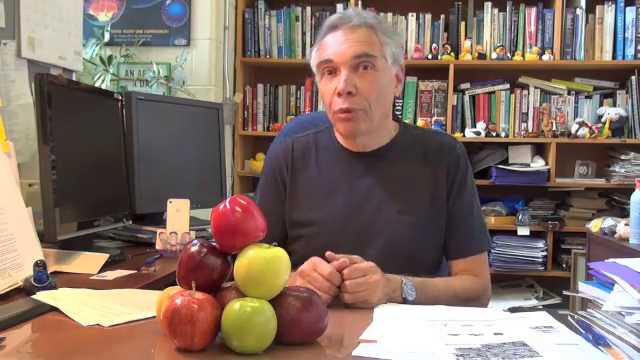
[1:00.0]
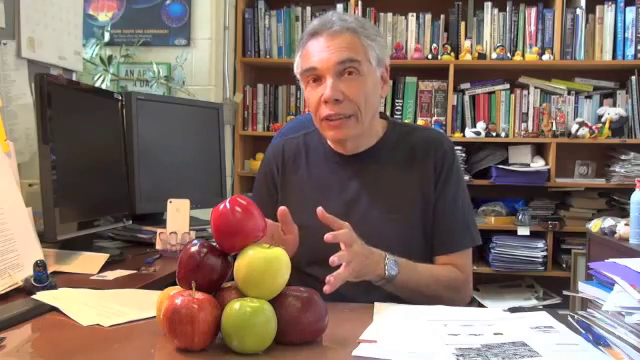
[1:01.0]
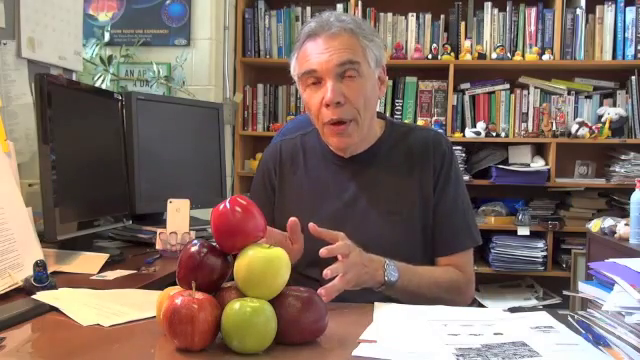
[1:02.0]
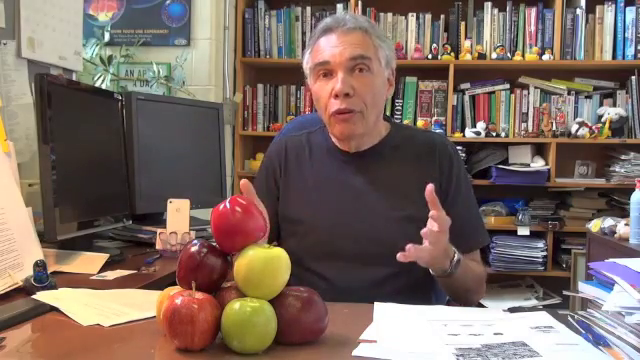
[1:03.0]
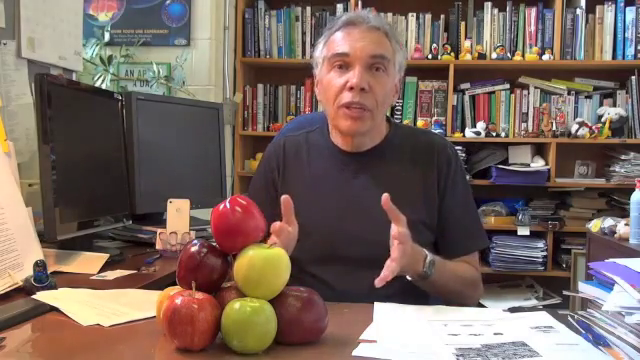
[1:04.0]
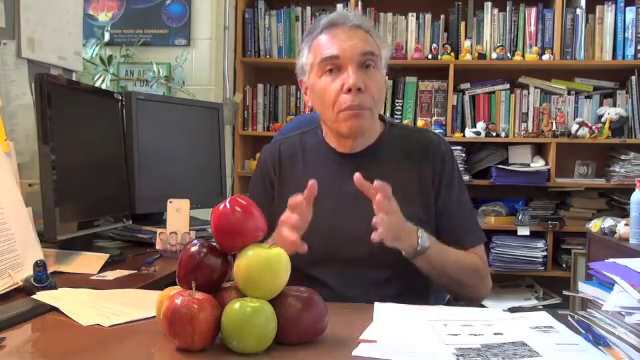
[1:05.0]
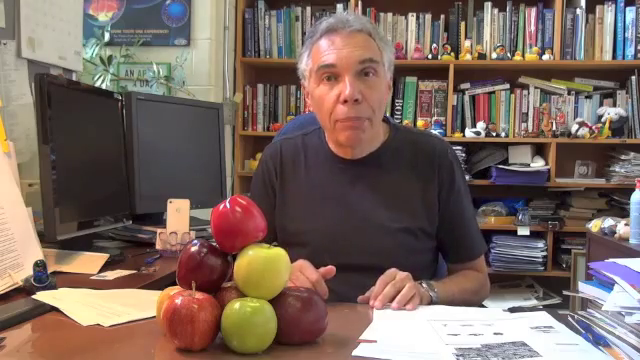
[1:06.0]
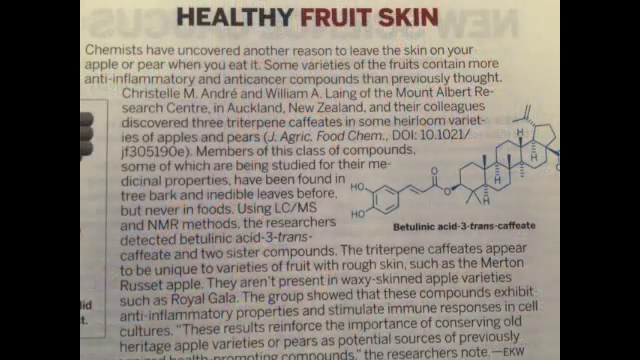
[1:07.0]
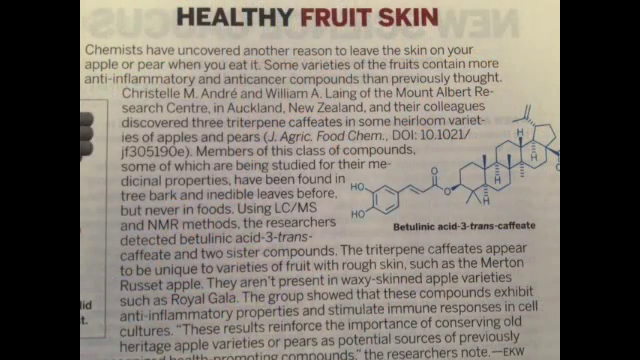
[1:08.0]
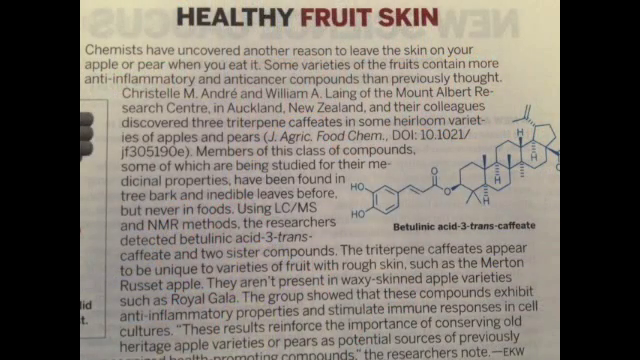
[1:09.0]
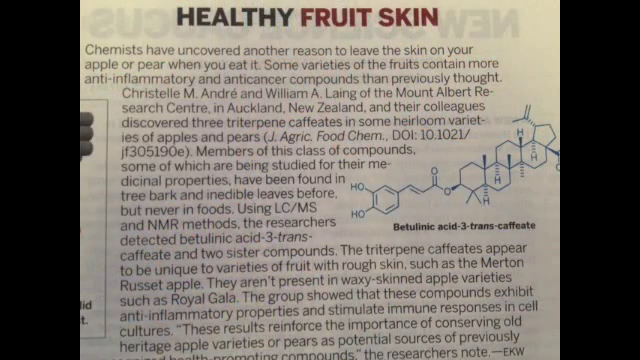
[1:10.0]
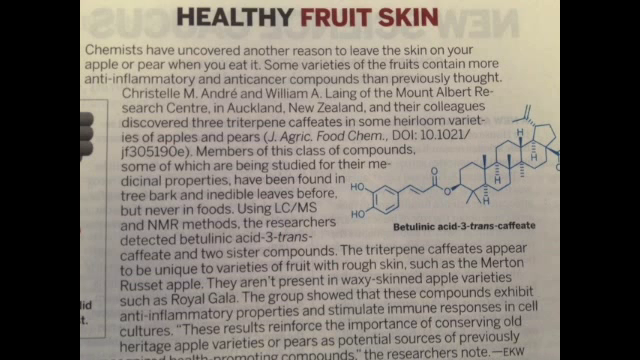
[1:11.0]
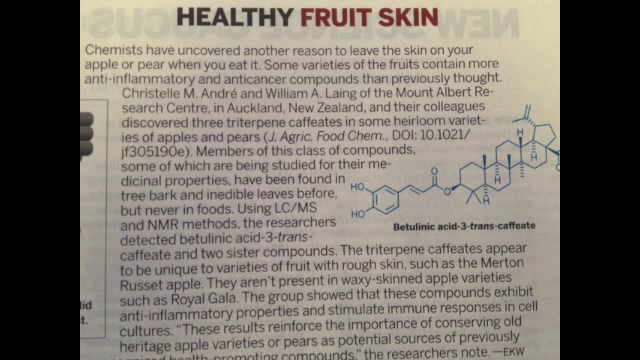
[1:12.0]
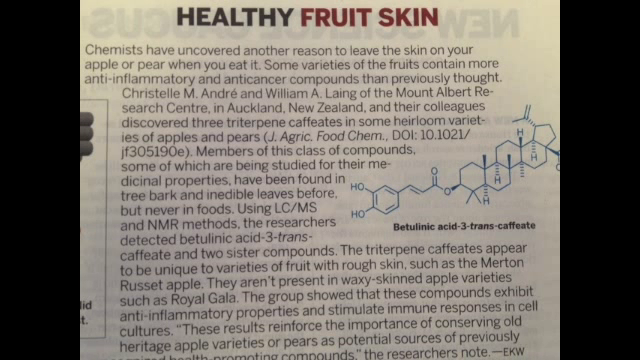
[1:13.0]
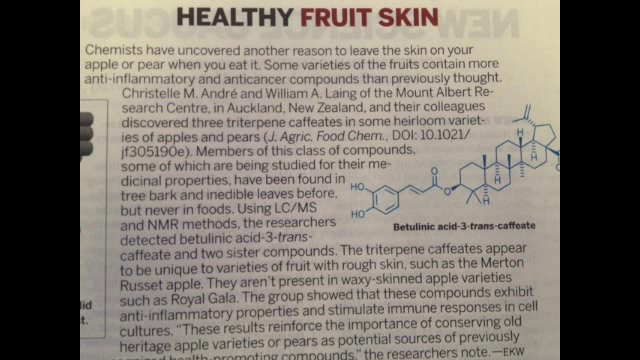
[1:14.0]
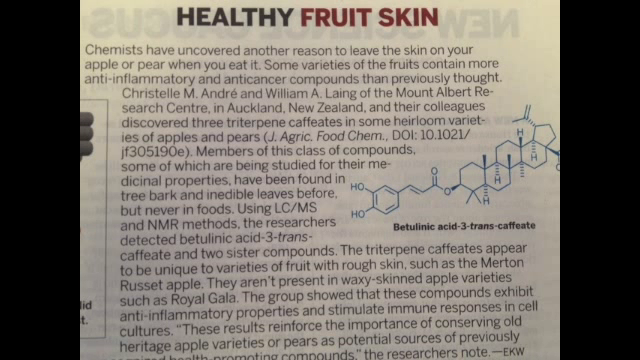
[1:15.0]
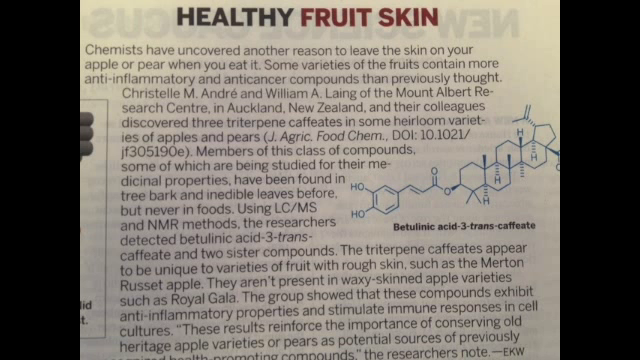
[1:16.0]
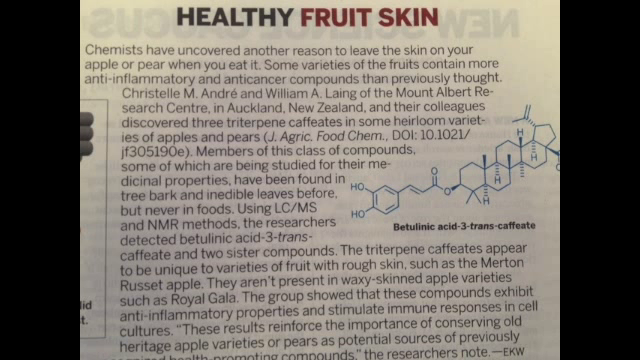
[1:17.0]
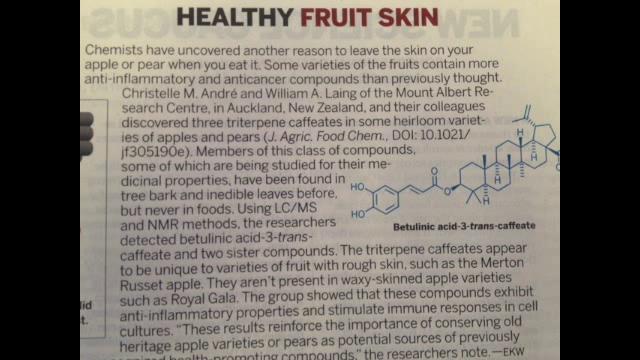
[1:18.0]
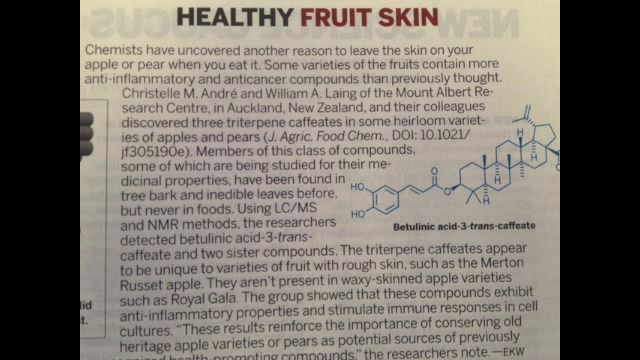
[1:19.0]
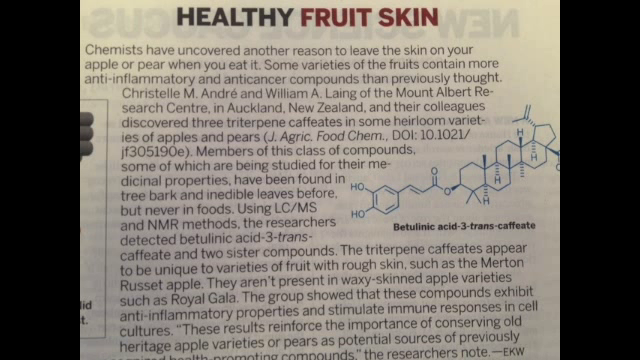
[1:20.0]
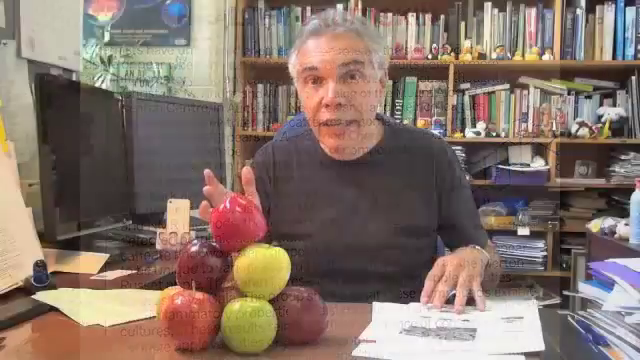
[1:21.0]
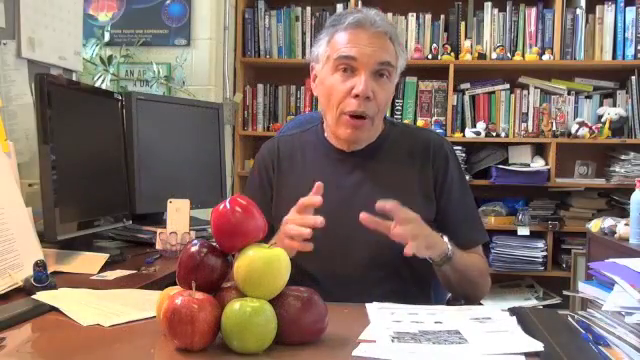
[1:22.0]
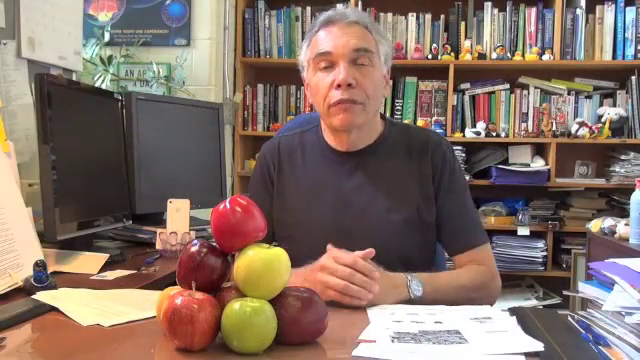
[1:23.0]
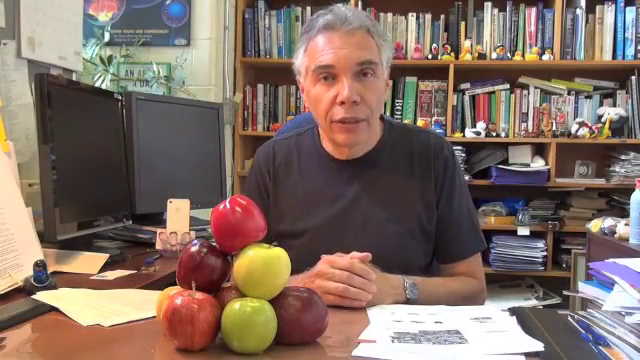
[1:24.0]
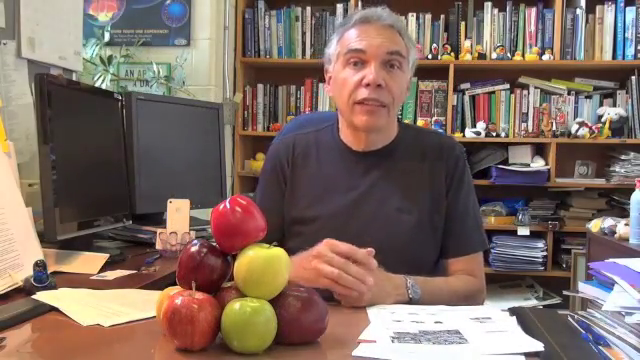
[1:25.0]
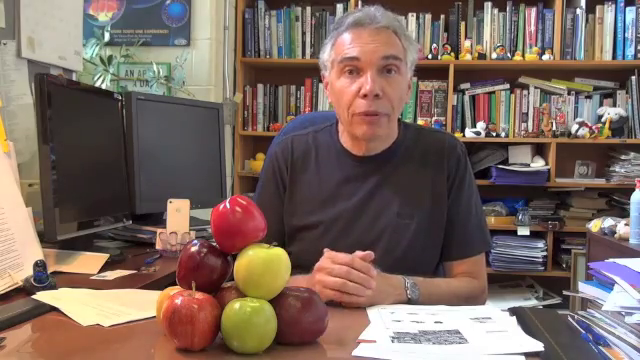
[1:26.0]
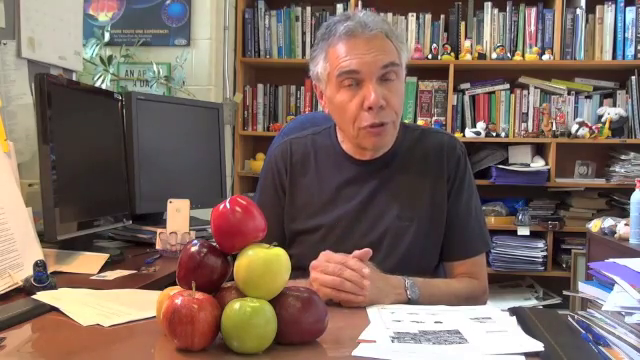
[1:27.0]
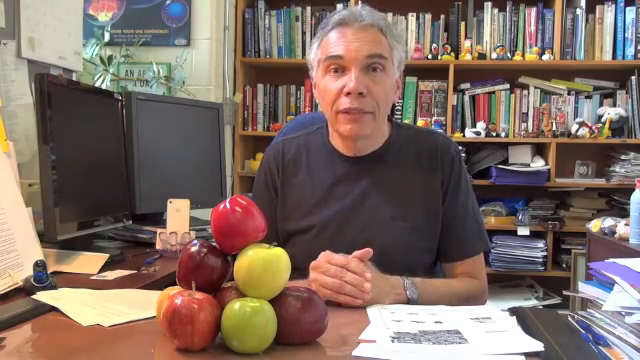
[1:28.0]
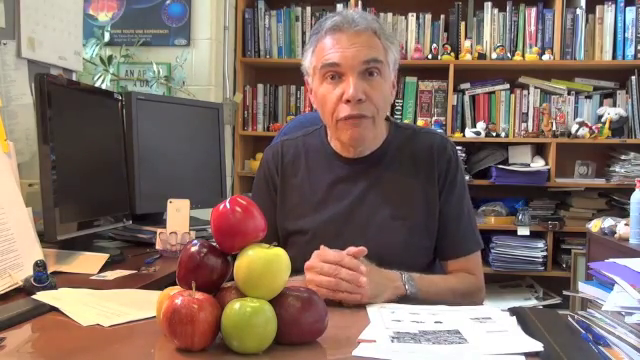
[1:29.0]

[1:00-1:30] A middle-aged man with gray hair, wearing a black t-shirt, sits at a desk talking directly to the camera. Two computer monitors are on the part of the desk to his right, and behind him is a bookcase filled with books, papers and other paraphernalia. On the desk in front of him are some papers, but the biggest feature is a stack of red, green and yellow apples piled up in almost a pyramid shape. He speaks to the camera for a while, gesturing with his hands. The video then cuts to a still image of what looks like an article, maybe from a journal, titled "Healthy fruit skin". On the page is an image of a fairly elaborate, large organic molecule labeled "betulinic acid 3-transcaffeate", surrounded by text that begins "chemists have uncovered another reason to leave the skin on your apple or pear". After some time on the article, the video returns to the same man speaking directly to the camera and motioning with his hands.